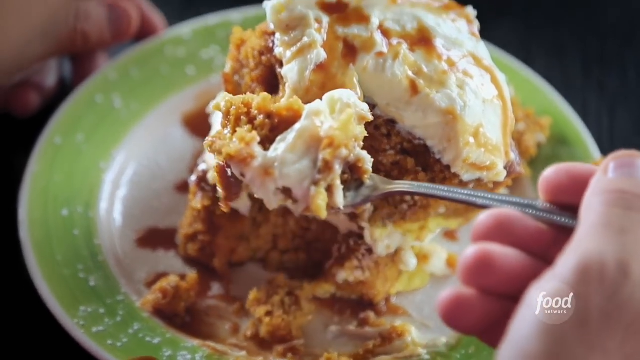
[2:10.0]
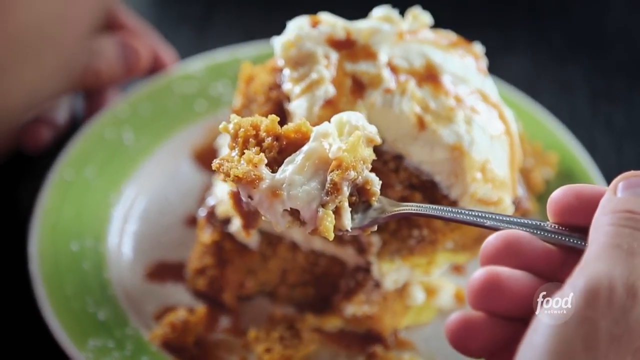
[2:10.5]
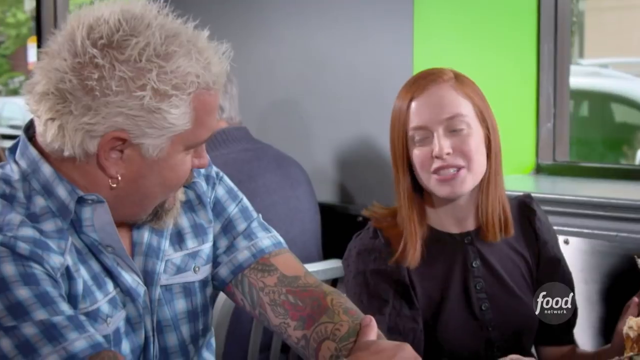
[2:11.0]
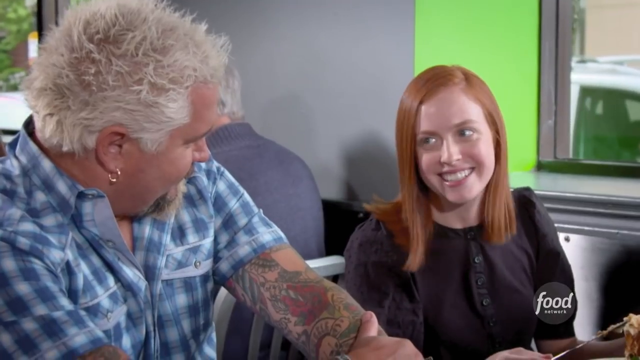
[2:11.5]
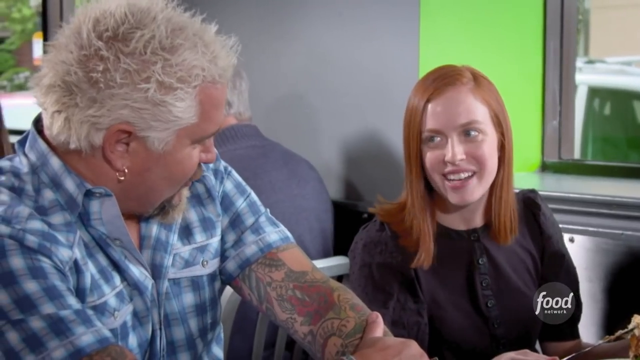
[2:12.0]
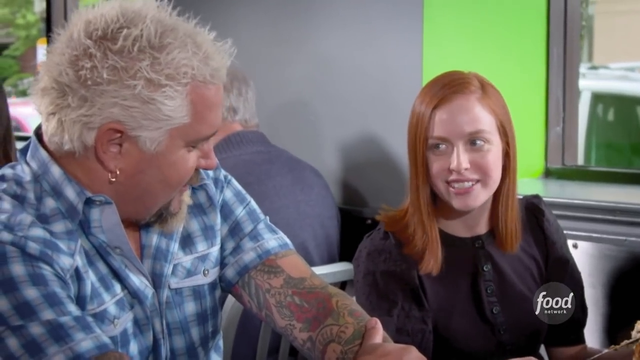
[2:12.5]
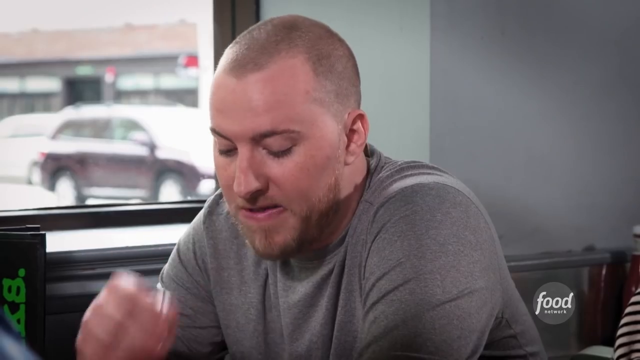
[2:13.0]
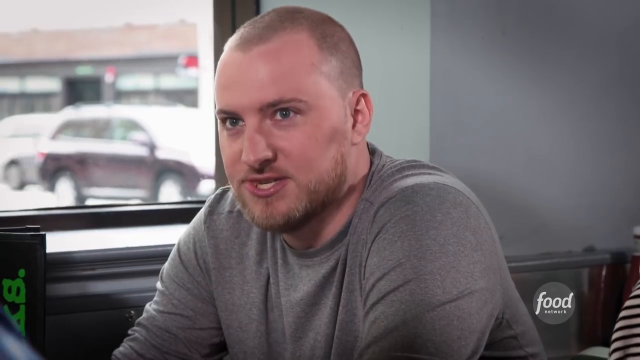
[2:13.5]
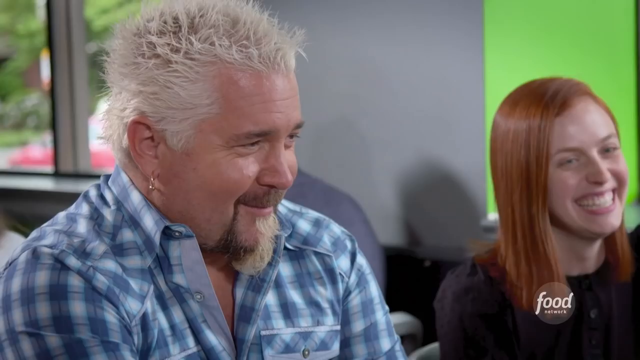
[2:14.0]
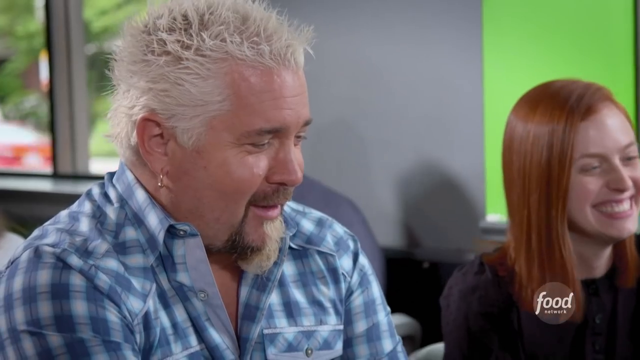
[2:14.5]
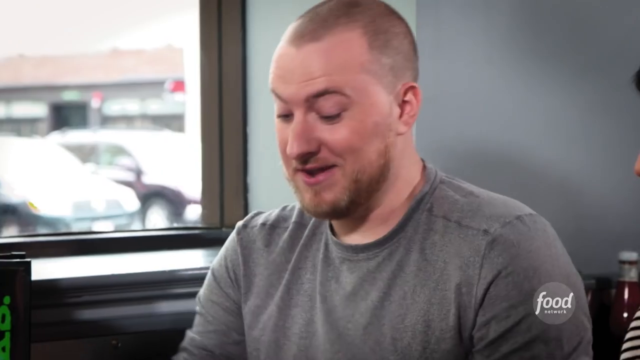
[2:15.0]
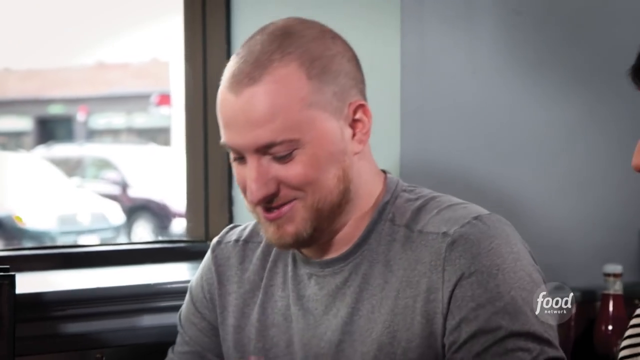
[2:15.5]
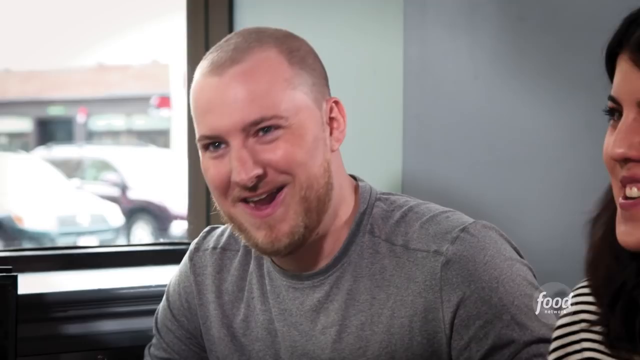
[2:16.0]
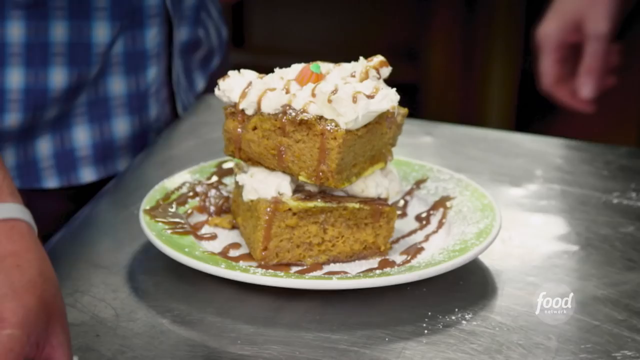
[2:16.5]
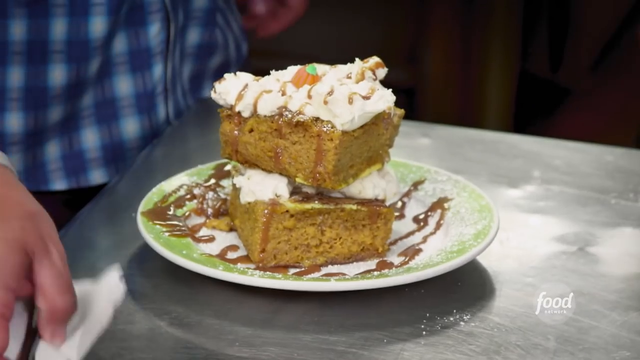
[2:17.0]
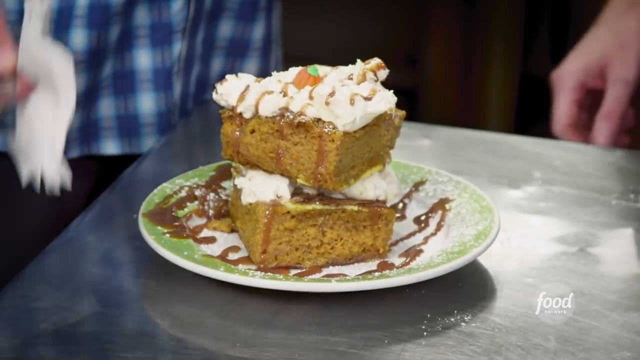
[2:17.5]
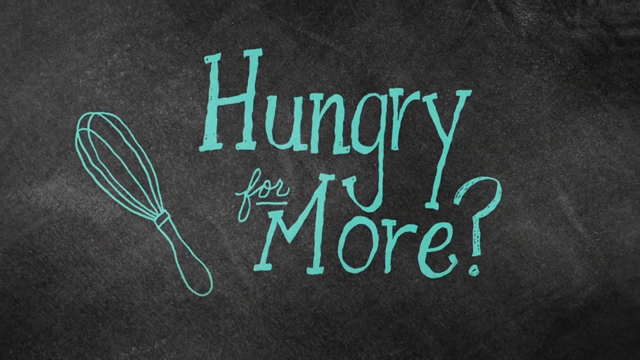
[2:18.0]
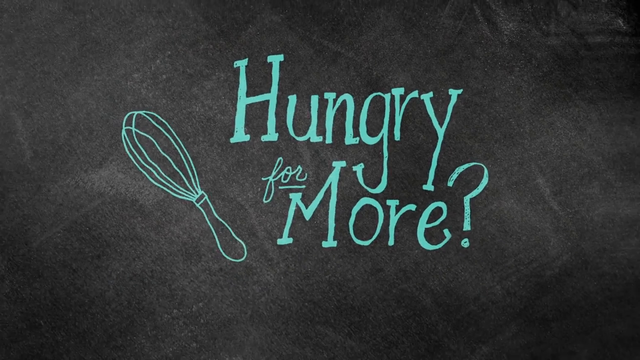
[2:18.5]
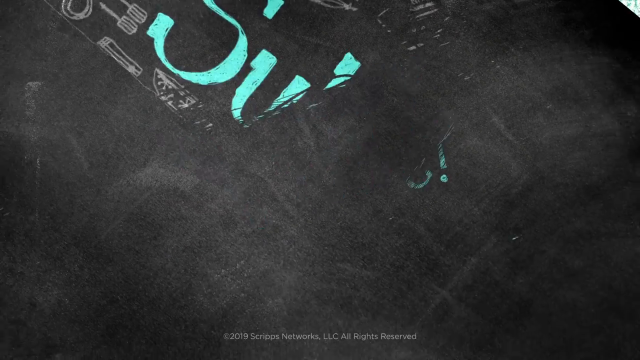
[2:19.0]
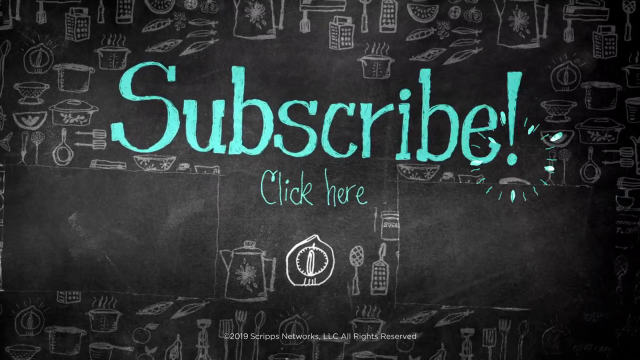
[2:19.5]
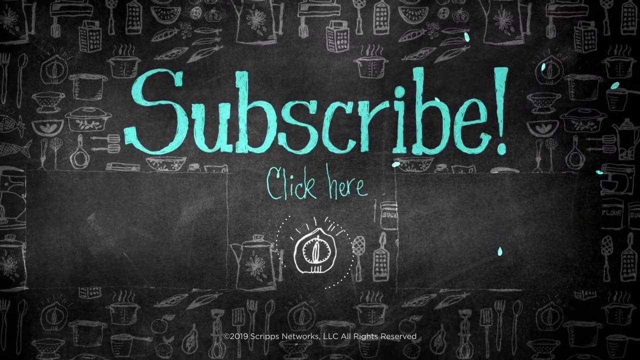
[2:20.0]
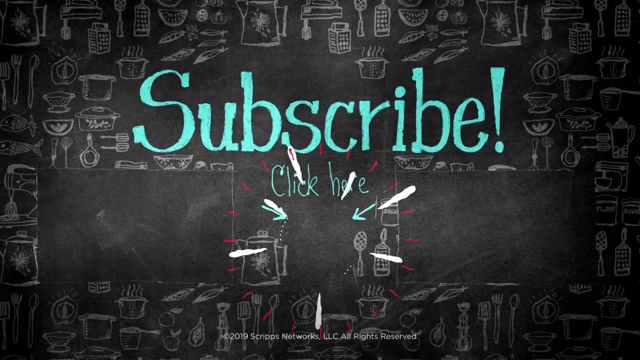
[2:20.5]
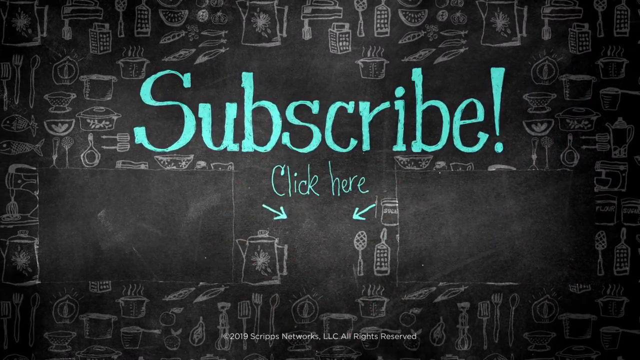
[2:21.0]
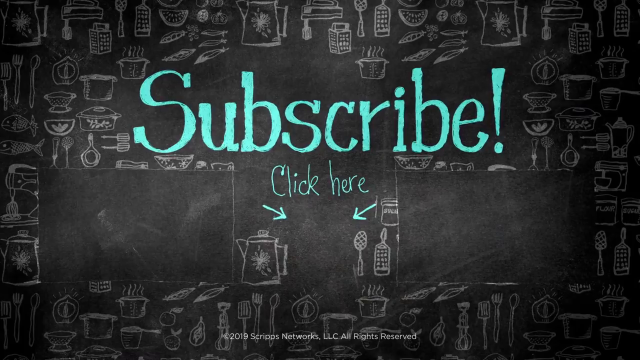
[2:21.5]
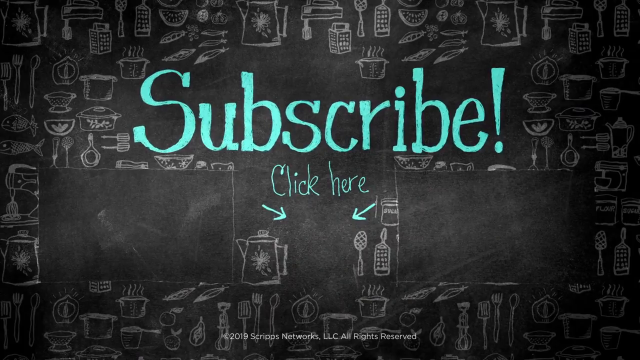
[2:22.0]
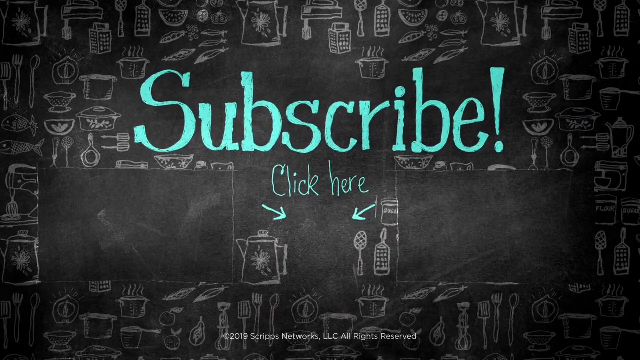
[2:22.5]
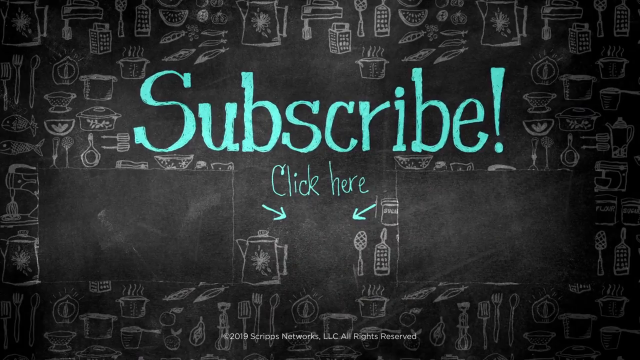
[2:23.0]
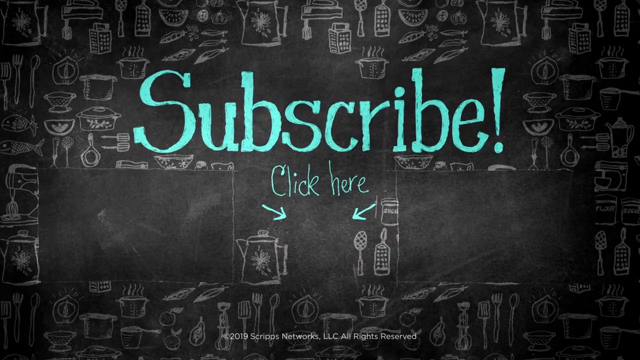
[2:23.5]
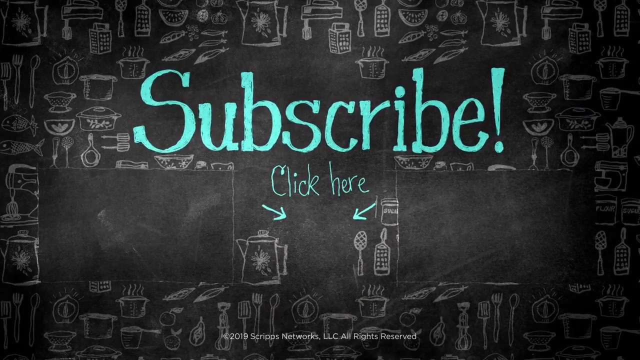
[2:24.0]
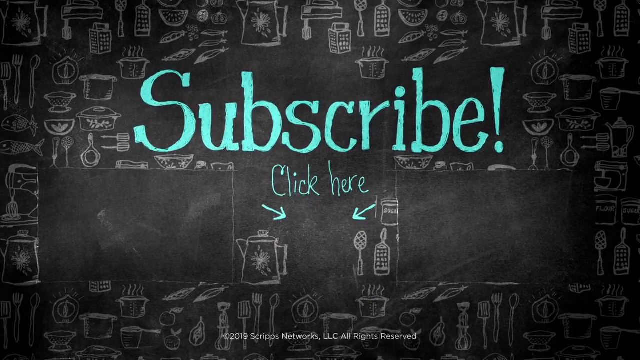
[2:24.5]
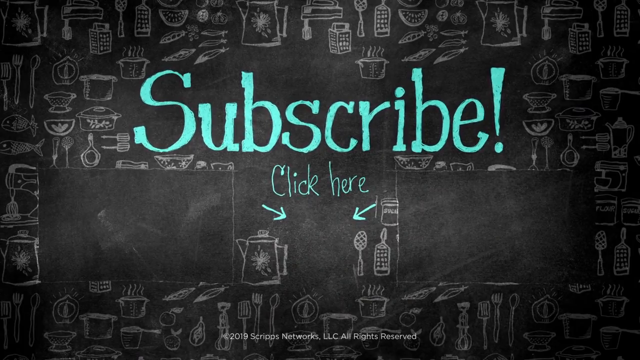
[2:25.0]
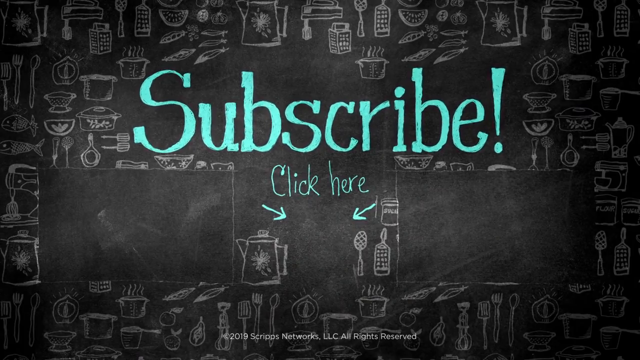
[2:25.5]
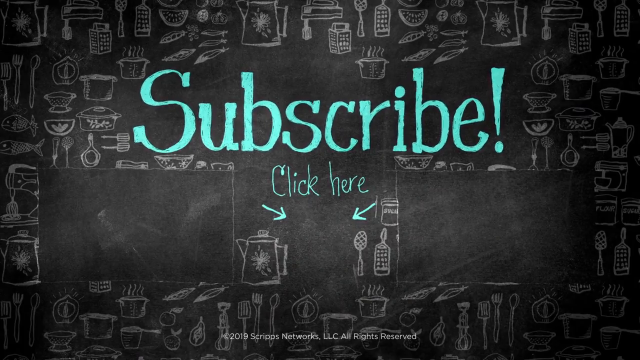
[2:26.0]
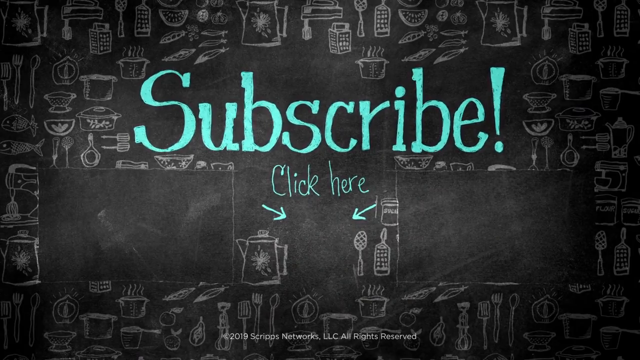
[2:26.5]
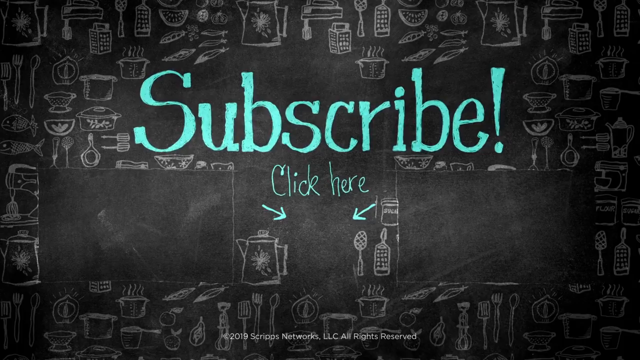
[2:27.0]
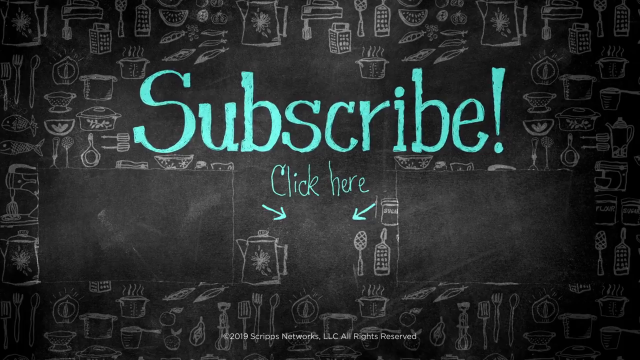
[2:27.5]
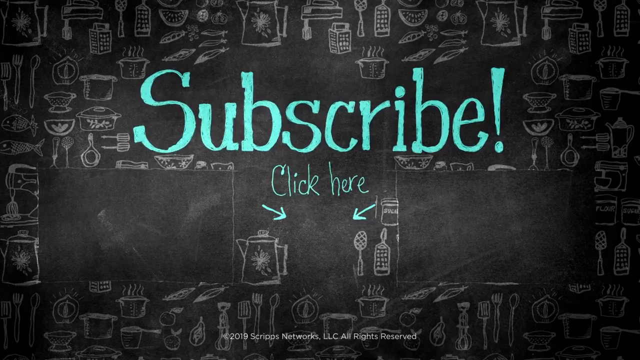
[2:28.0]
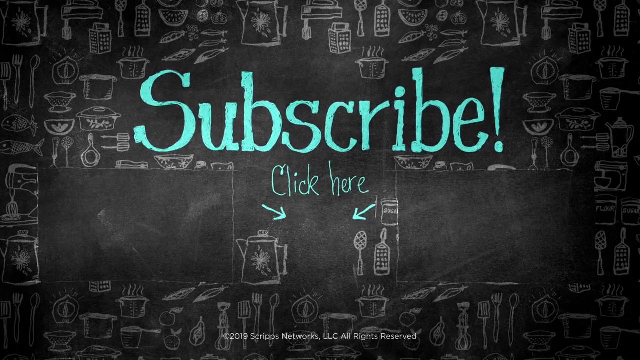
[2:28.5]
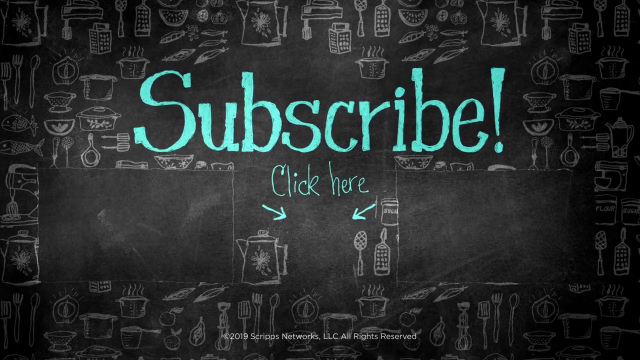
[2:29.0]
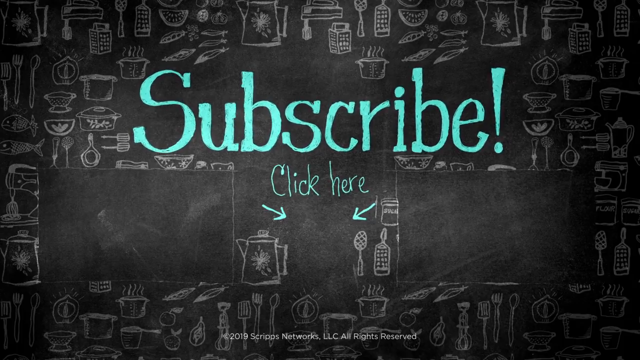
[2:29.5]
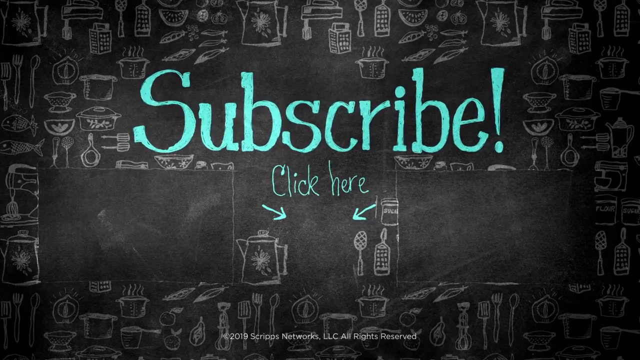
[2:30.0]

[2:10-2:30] People eat more of the cake, served on plates with a green rim covered in little bumps that mimic the look and feel of a pickle, matching the restaurant's name. At the very end, text reads "Hungry for more?", then "Subscribe!" with a big exclamation point, and "Click here!" at the bottom with two arrows pointing. In the background is a blackboard with pictures of food items such as pastas, fruits and breads, and lots of cooking utensils. As the image moves from top to bottom, the utensils repeat many times, each drawn differently, so they were probably drawn by hand.